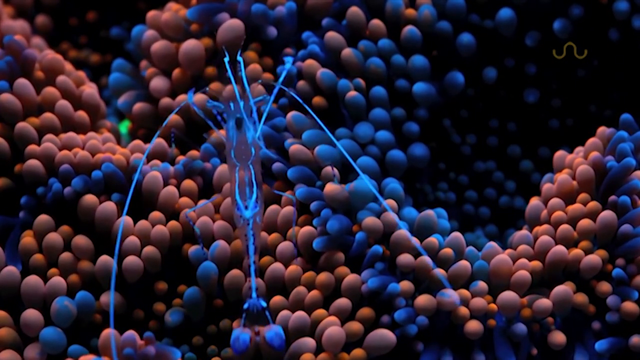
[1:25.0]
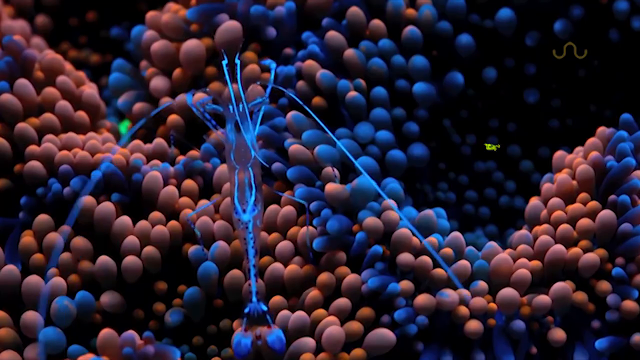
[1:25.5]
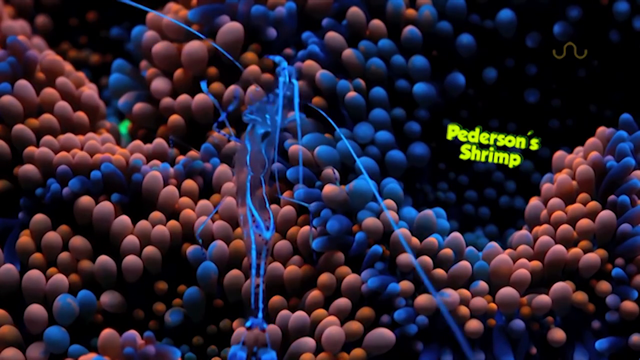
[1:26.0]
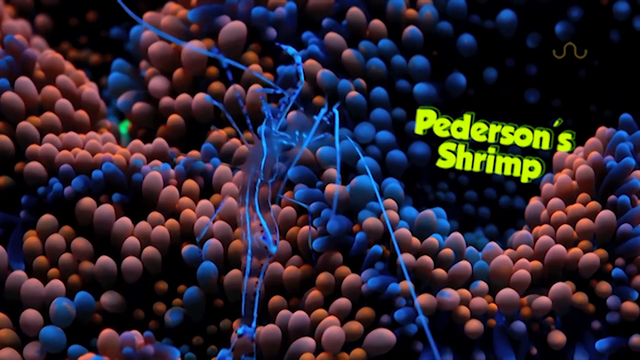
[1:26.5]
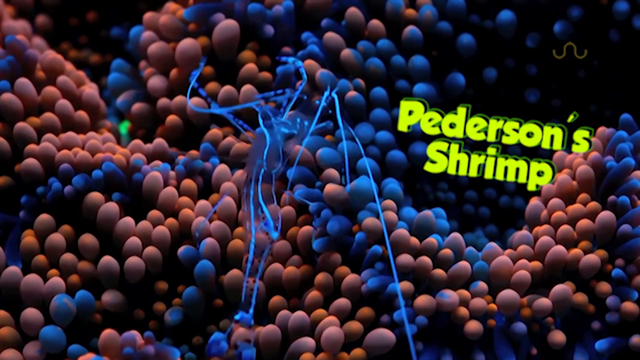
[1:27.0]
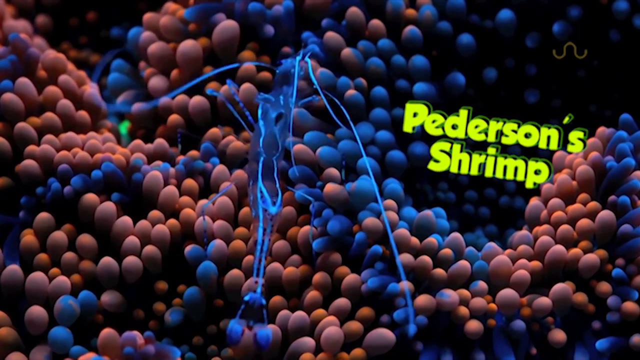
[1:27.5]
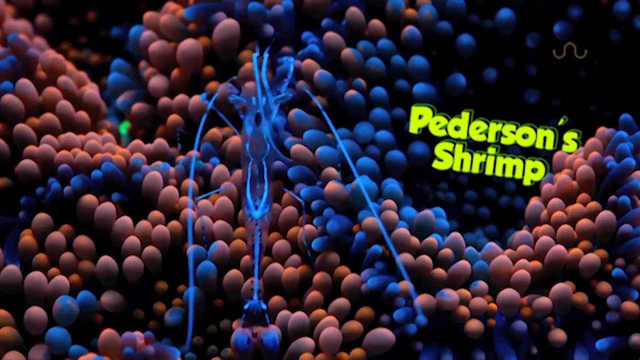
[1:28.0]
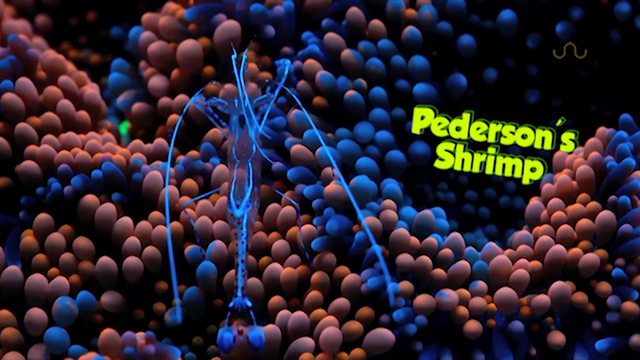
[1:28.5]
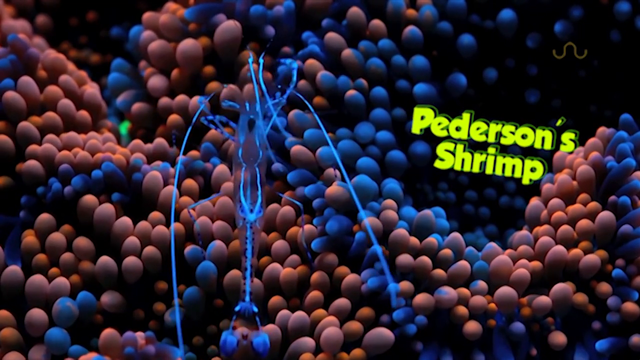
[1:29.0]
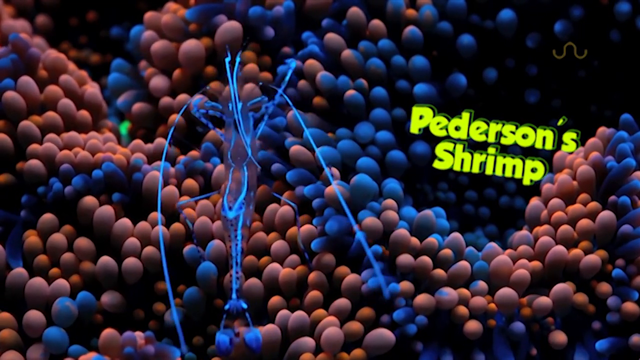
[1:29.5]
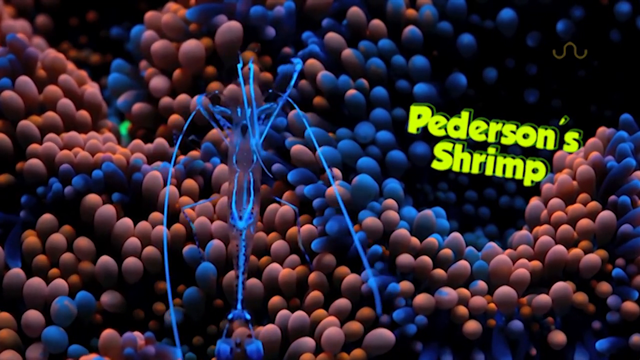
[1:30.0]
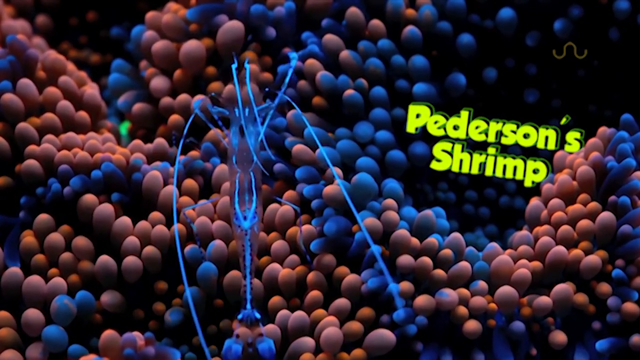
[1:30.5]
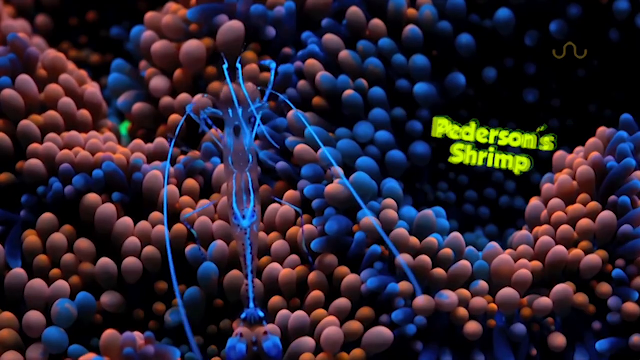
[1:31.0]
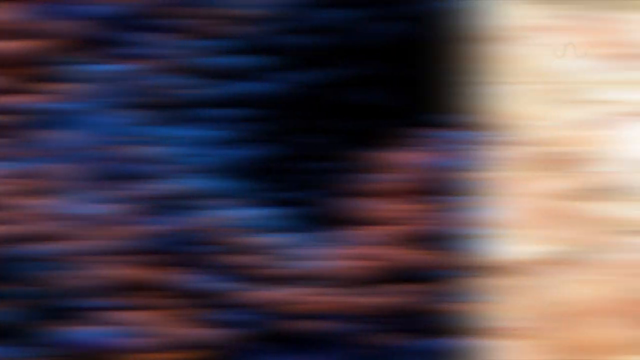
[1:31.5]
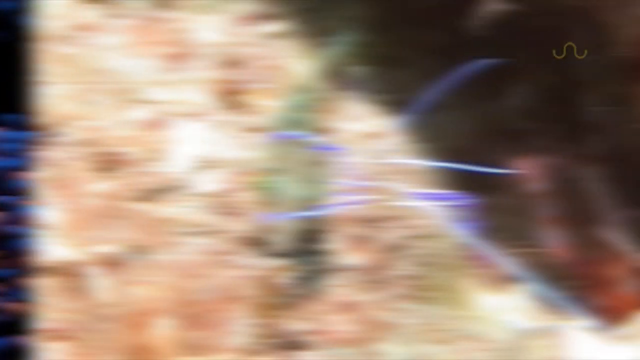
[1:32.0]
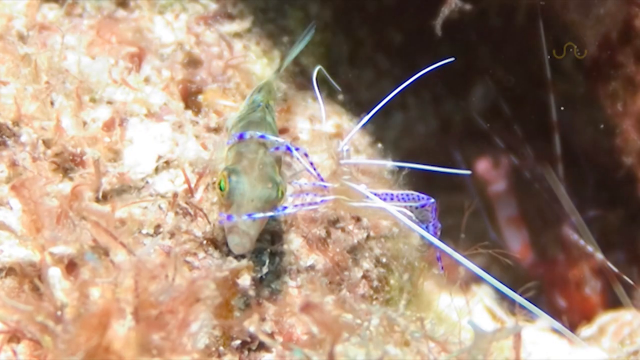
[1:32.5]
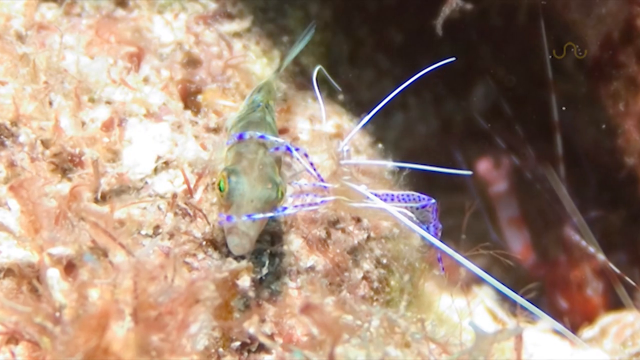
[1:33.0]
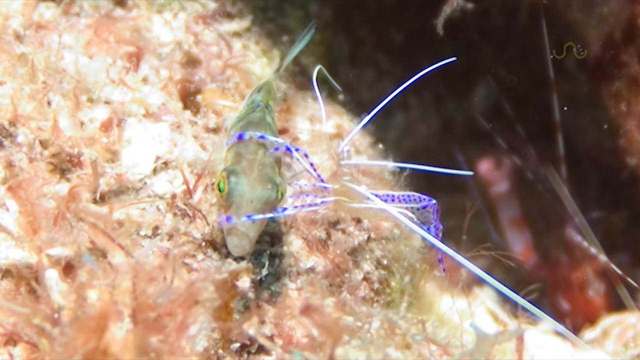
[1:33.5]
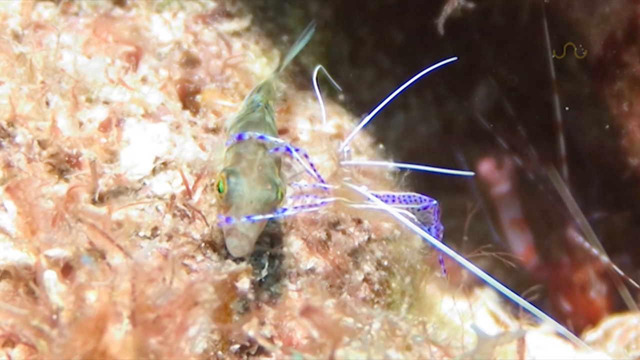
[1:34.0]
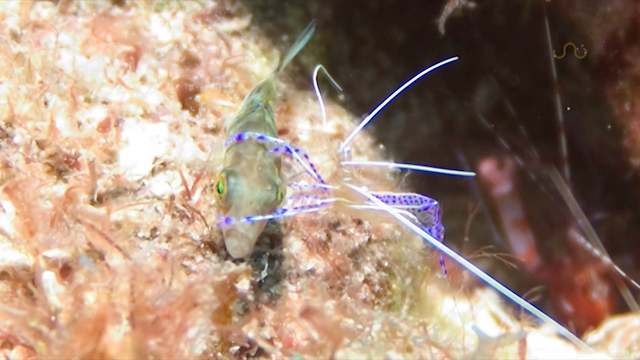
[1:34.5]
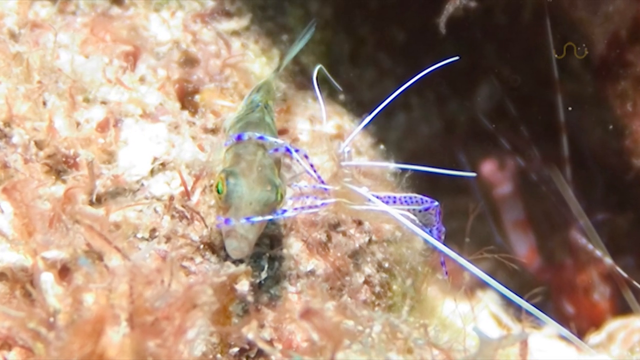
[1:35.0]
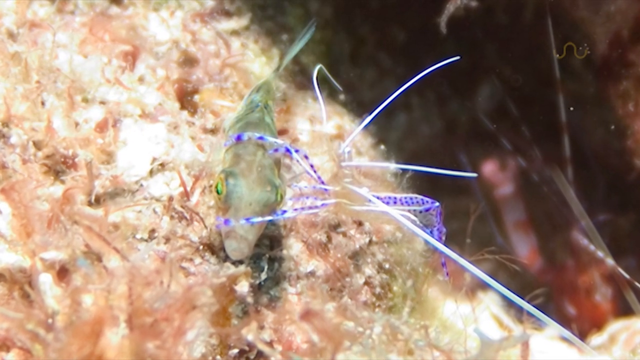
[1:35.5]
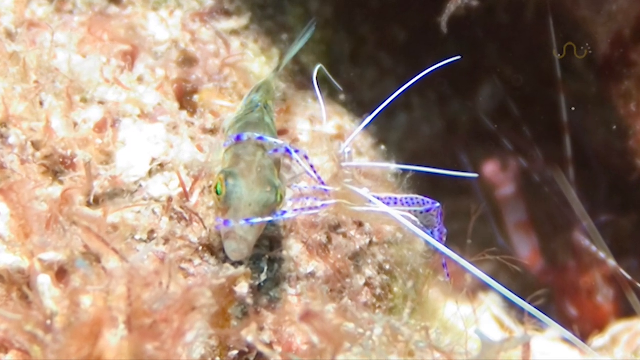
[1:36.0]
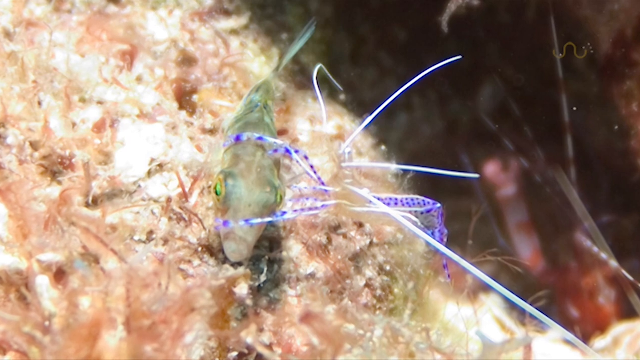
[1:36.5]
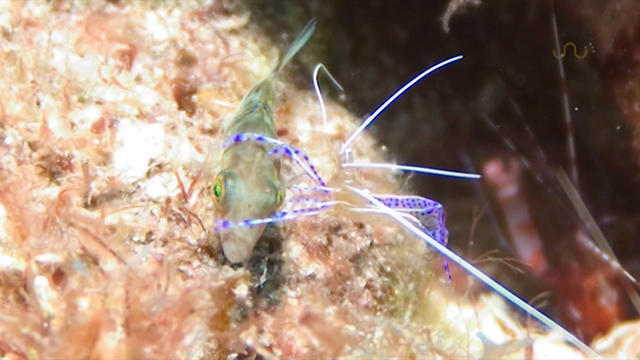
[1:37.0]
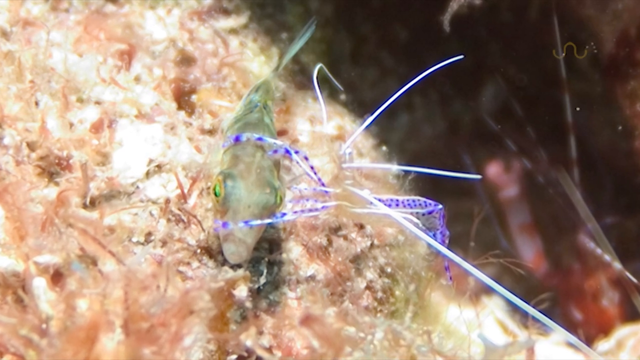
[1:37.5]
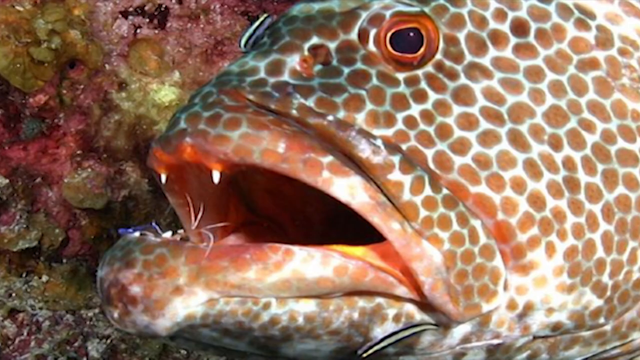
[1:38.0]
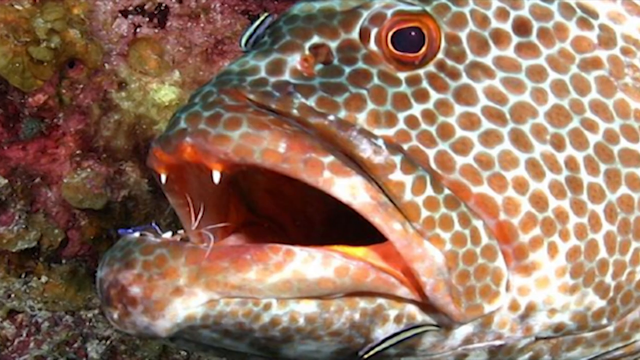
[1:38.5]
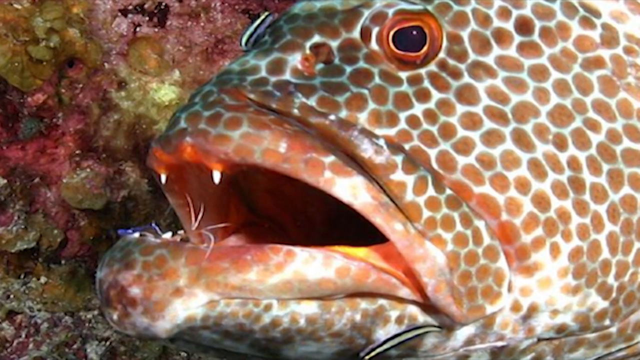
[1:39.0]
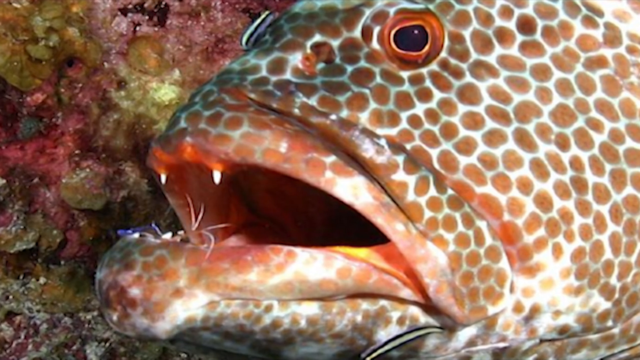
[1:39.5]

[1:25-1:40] The shrimp appears, with the words "Patterson's shrimp" in bright green letters to the right. The shrimp looks transparent and is not very big, and it looks like it lives on a coral reef of some sort. It has captured a fish smaller than itself, and it is also seen inside the mouth of a really big fish that has lots of spots on it. The small and big fish look like the same type of fish, just different sizes.